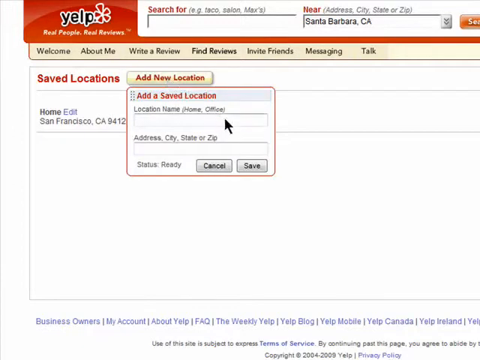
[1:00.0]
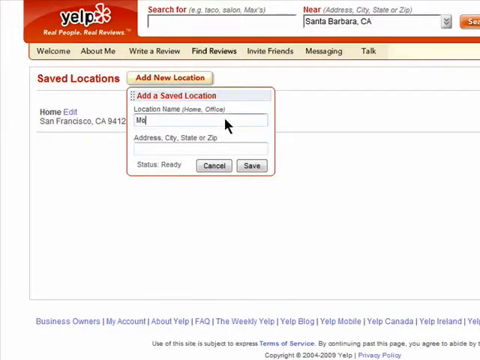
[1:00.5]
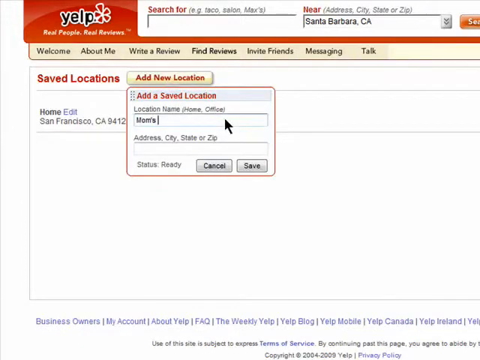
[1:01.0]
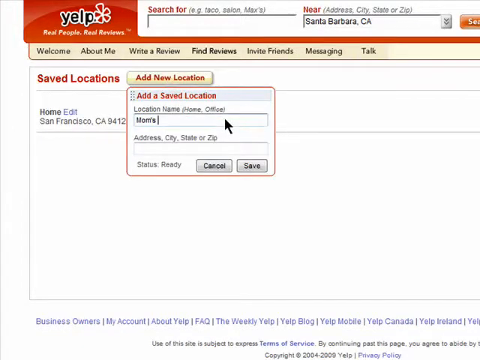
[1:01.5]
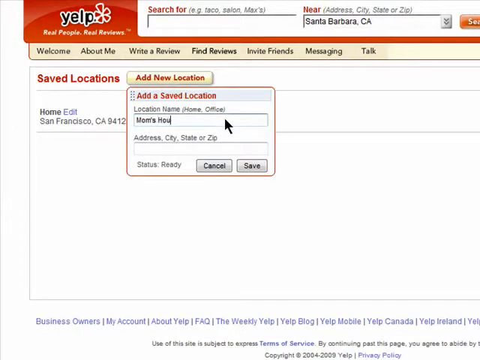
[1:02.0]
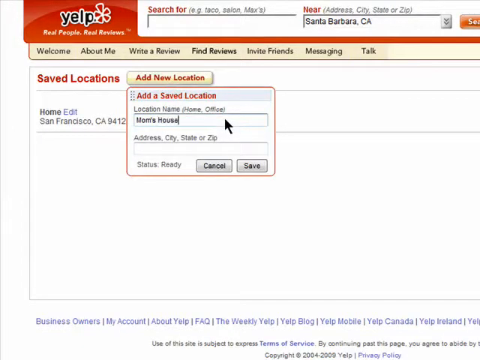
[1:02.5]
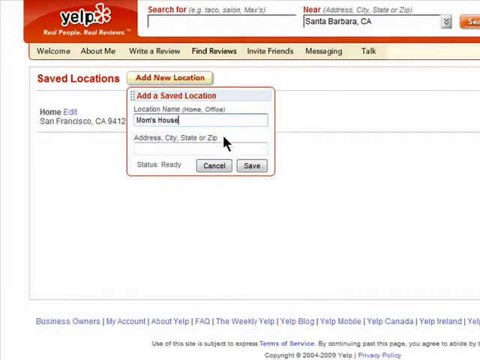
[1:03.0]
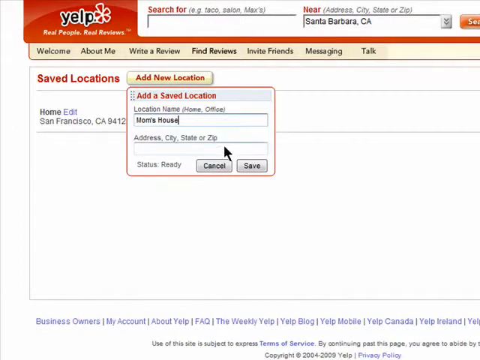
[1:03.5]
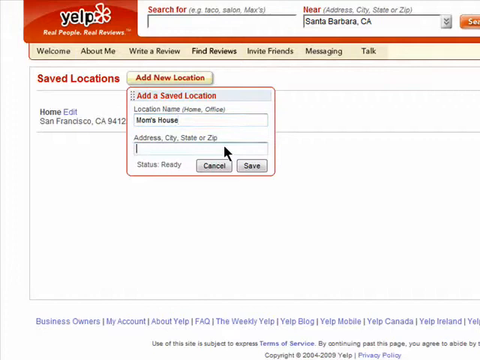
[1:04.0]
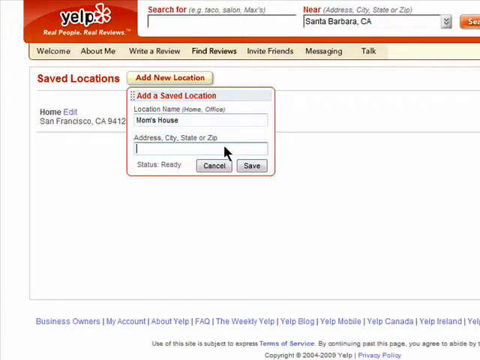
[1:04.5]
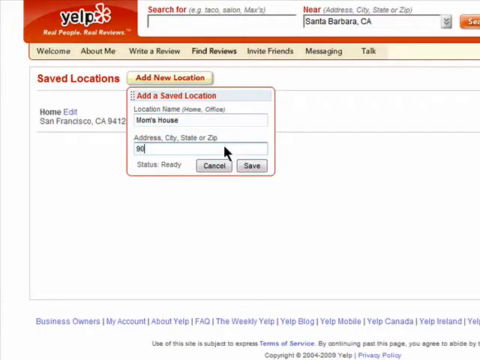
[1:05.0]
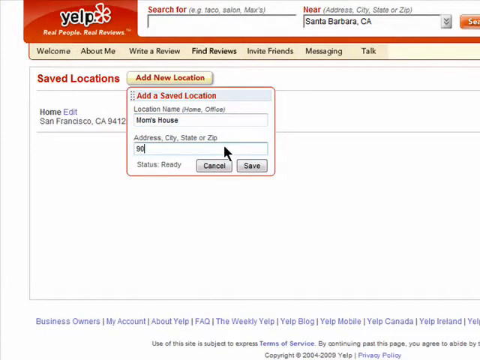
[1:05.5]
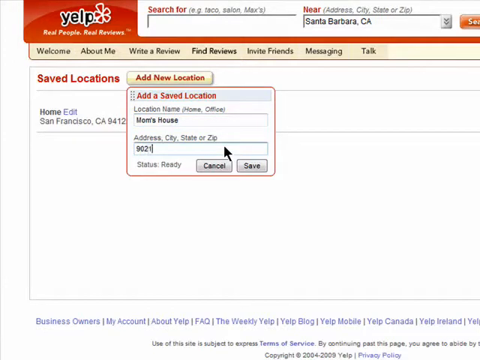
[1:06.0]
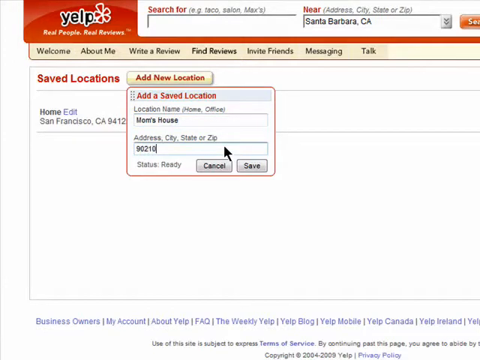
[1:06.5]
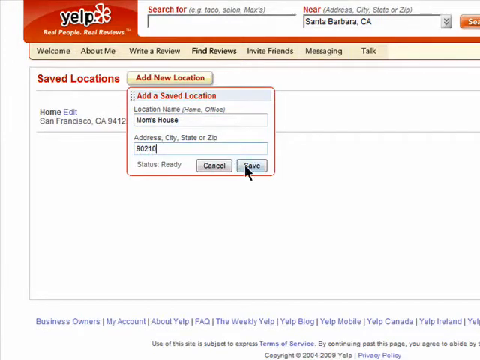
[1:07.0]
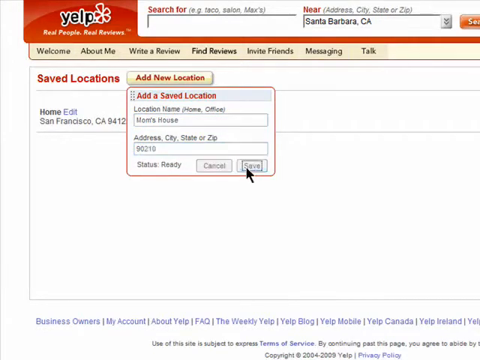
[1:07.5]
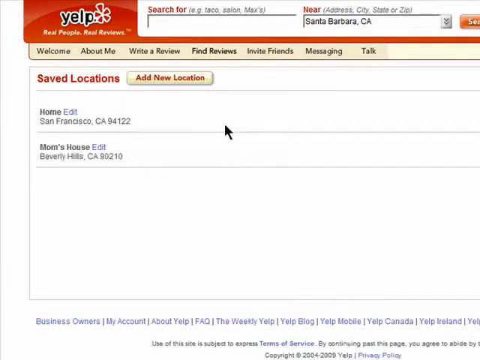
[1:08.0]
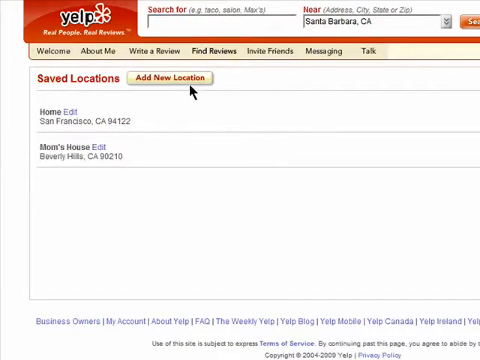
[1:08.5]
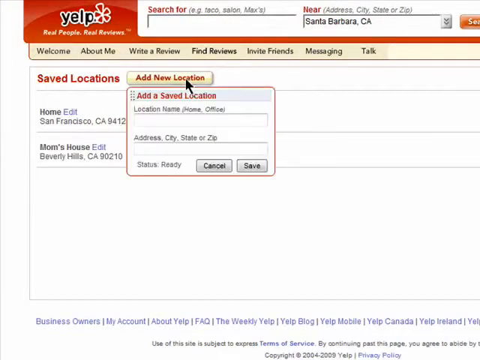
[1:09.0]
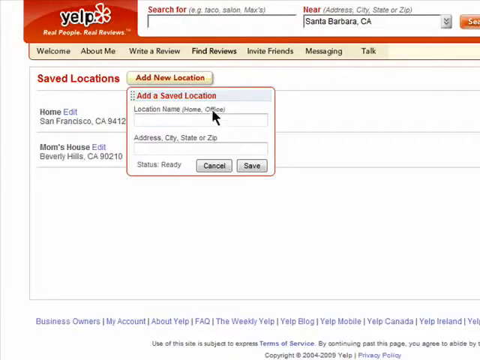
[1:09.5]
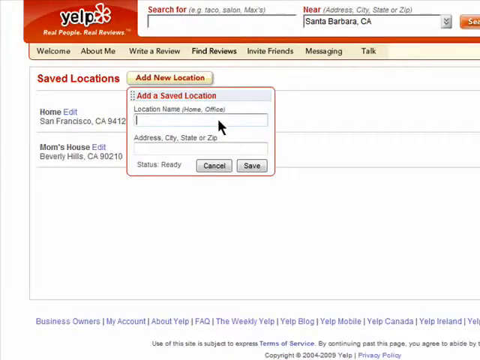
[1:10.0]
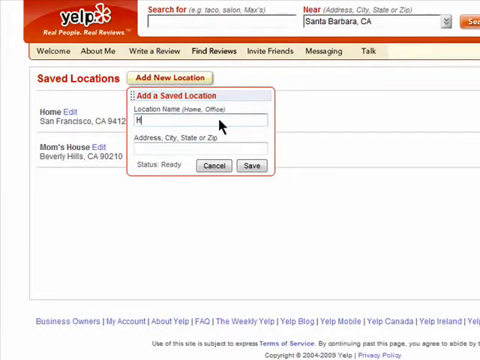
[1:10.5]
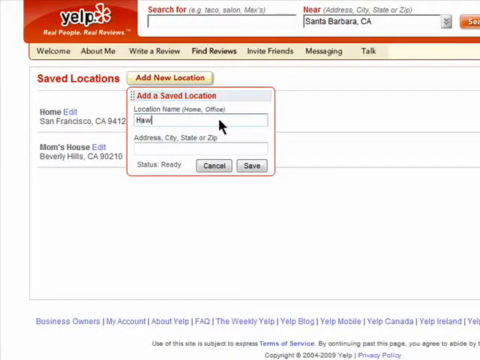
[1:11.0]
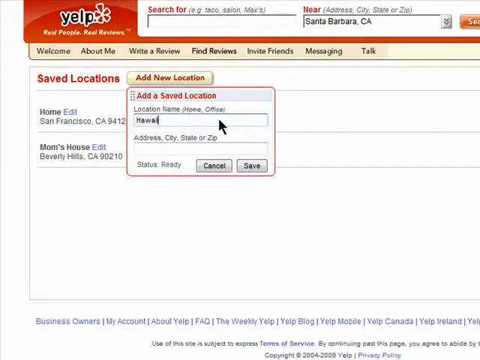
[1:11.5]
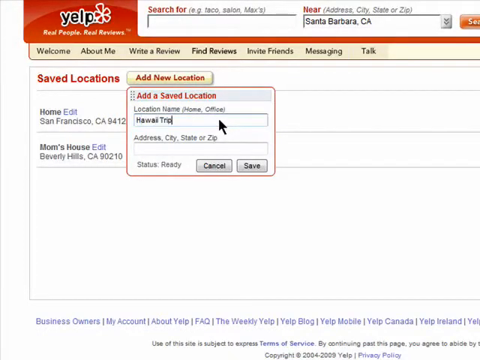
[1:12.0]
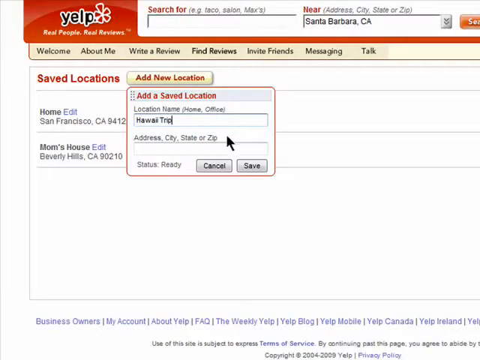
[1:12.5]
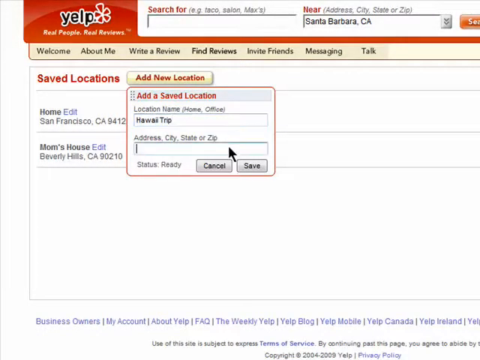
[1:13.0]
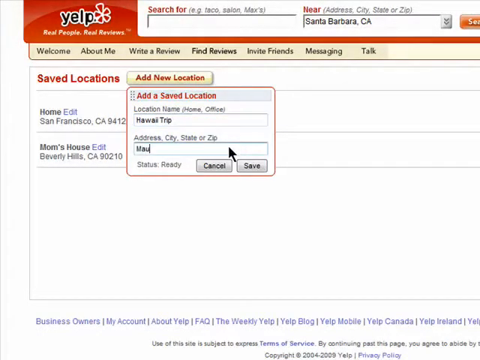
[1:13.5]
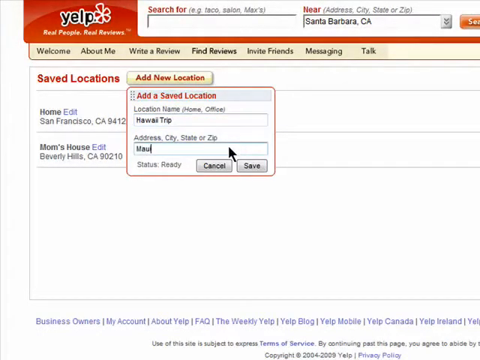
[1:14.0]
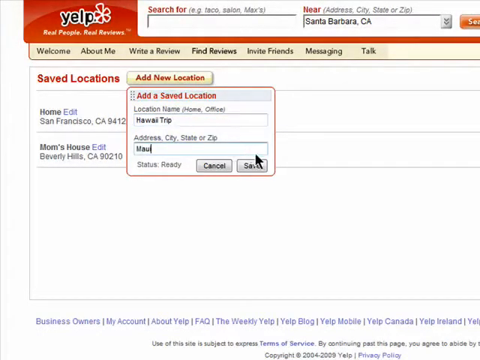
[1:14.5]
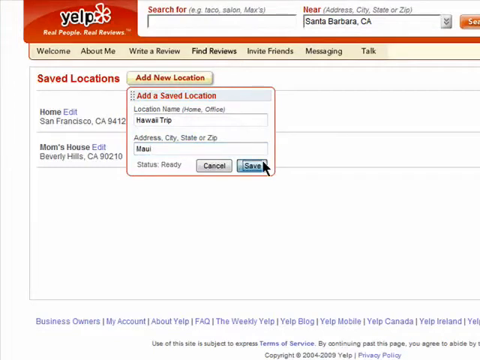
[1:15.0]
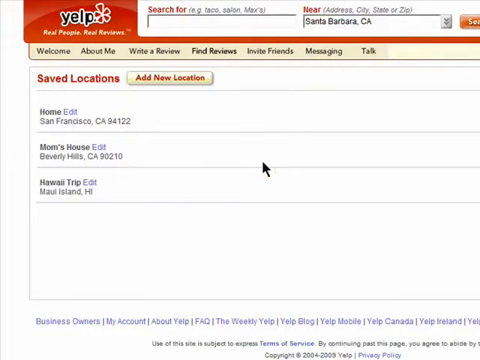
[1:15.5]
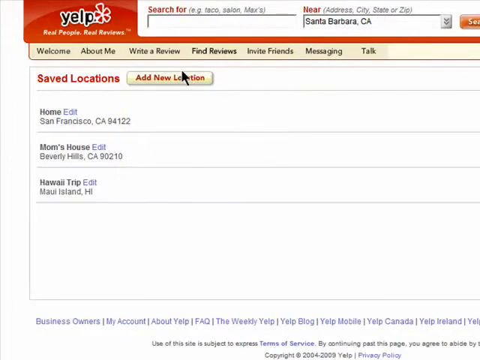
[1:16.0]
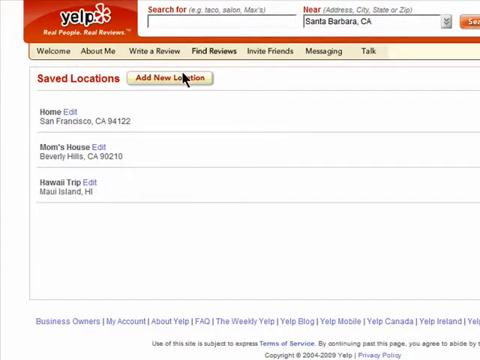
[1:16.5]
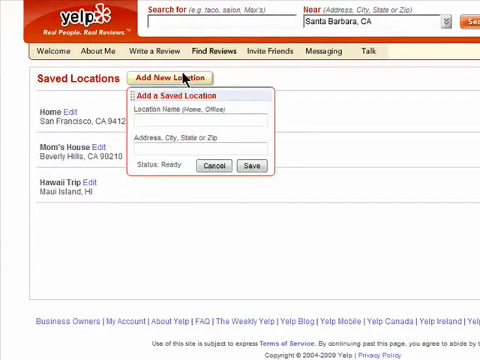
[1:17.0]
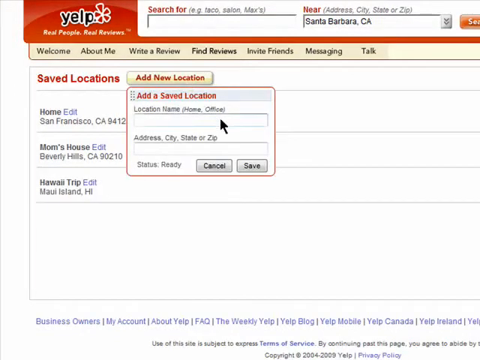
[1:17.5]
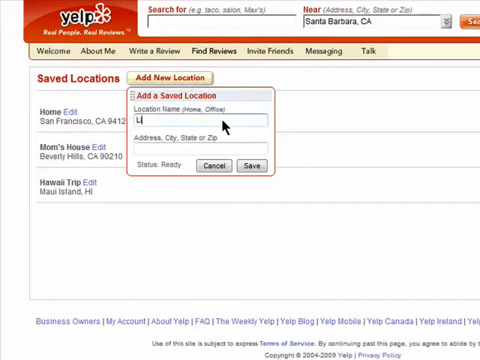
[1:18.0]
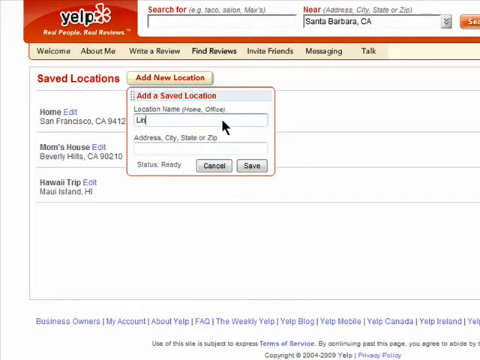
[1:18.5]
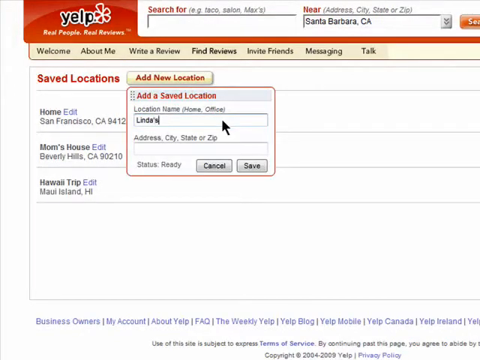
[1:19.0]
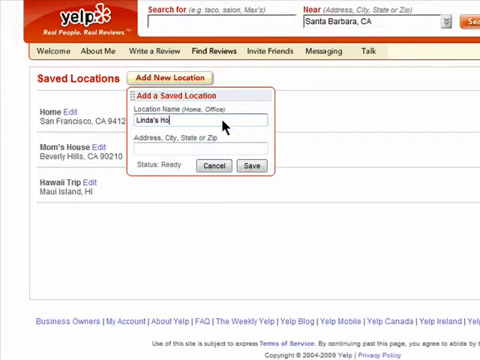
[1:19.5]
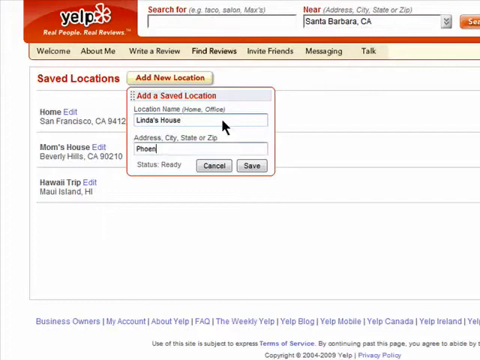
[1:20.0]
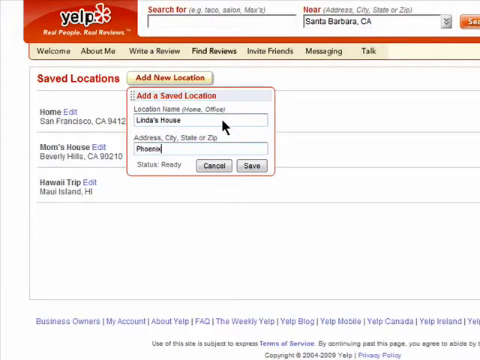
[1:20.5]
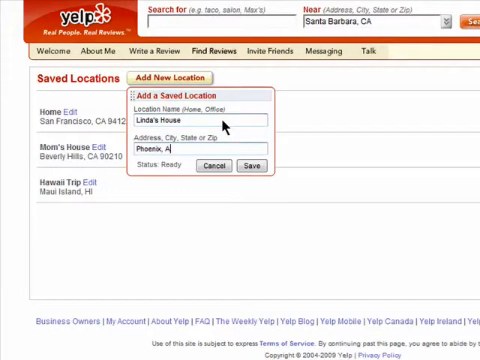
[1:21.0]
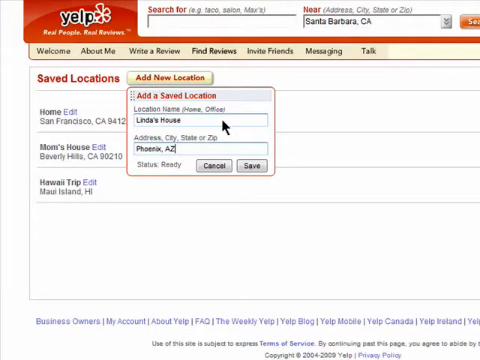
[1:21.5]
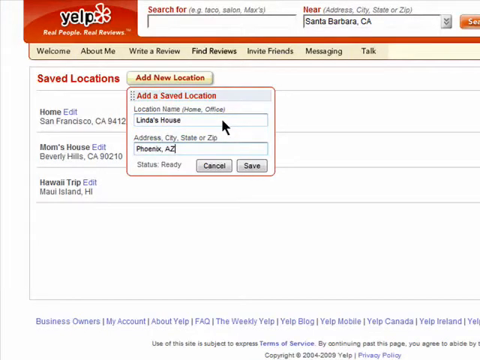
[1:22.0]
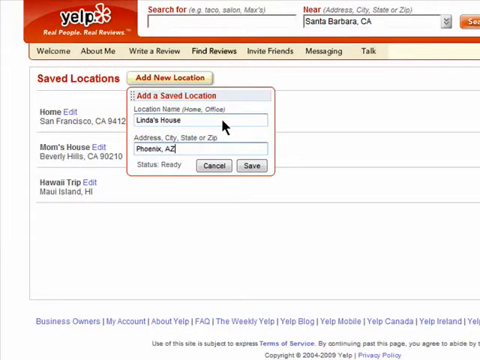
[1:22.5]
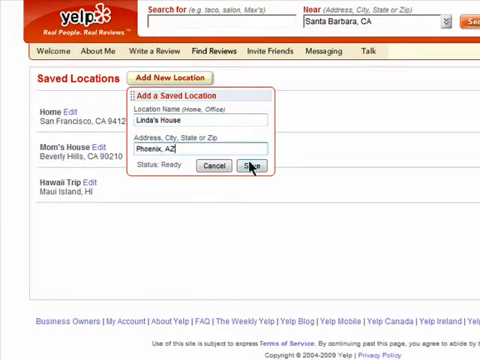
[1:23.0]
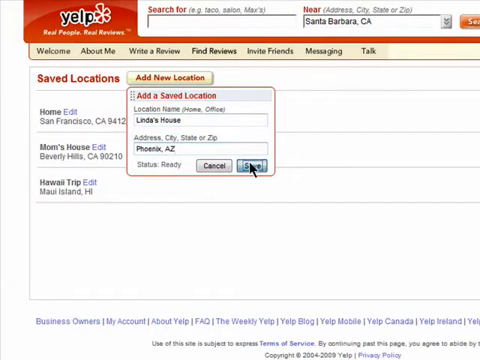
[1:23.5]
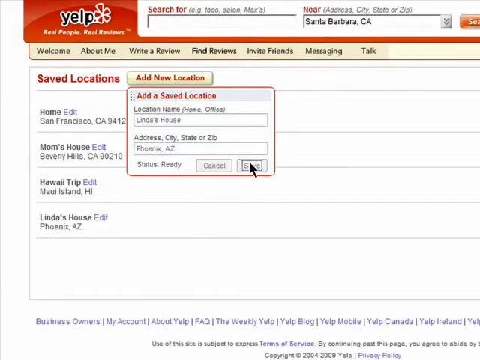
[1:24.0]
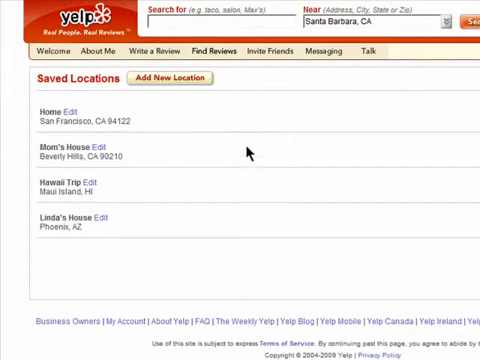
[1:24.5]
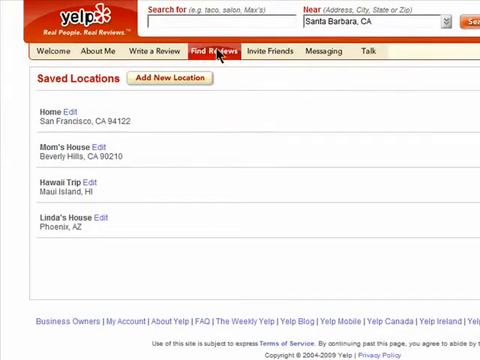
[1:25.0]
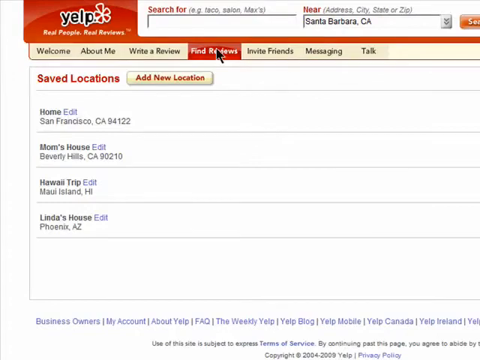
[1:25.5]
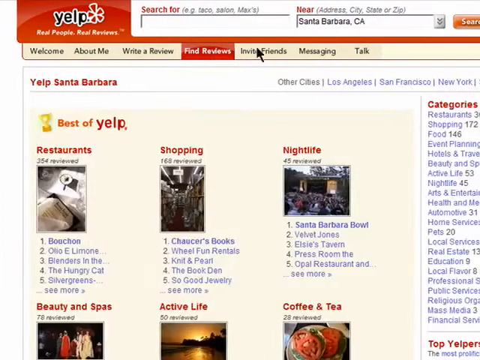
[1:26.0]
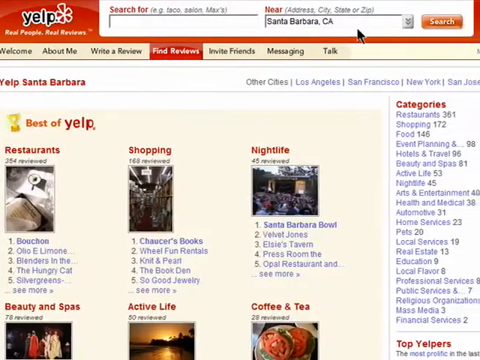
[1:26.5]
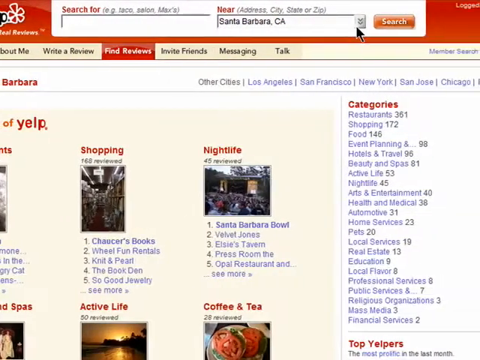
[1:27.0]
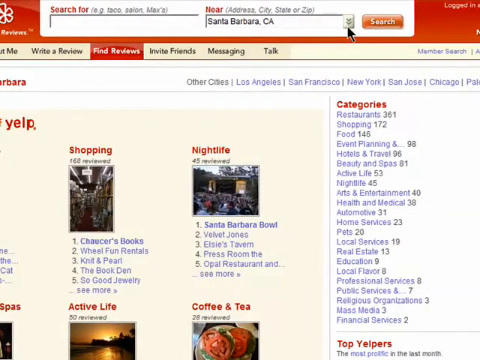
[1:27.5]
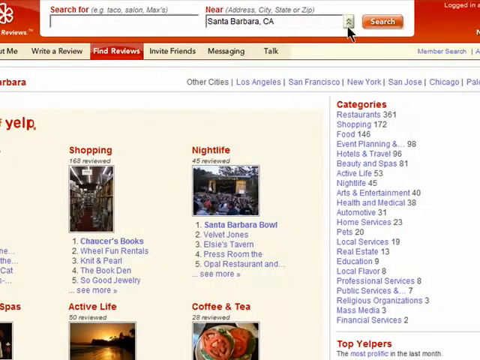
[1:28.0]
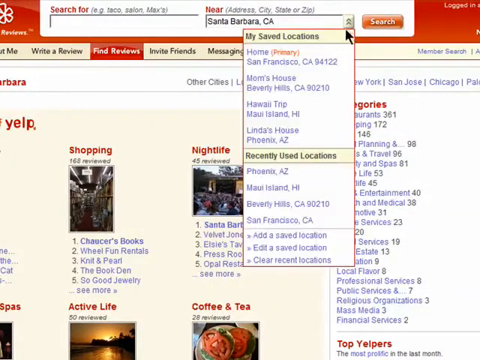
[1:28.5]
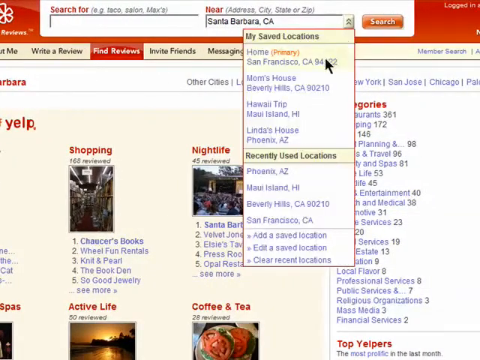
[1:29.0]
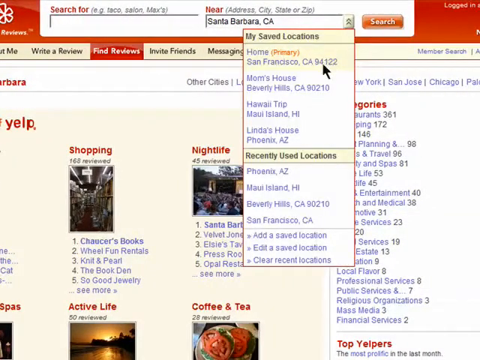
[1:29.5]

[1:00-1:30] On the saved locations screen, the arrow moves to Add New Location. Once that button is clicked, a form asks for a location name and a location address. "Mom's house" is entered as the name, and the zip code 90210 is added as the address. Under this are a status reading "ready" and two buttons, one to cancel and one to save, and the arrow clicks save. Add New Location is clicked a second time: the location name "Hawaii trip" is entered with Maui as the address, and the black arrow clicks save. For the third time a new location is added, with "Linda's house" as the name and Phoenix, Arizona as the address, and the black arrow clicks save.